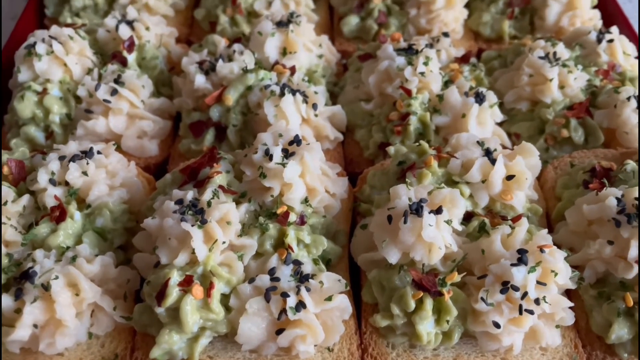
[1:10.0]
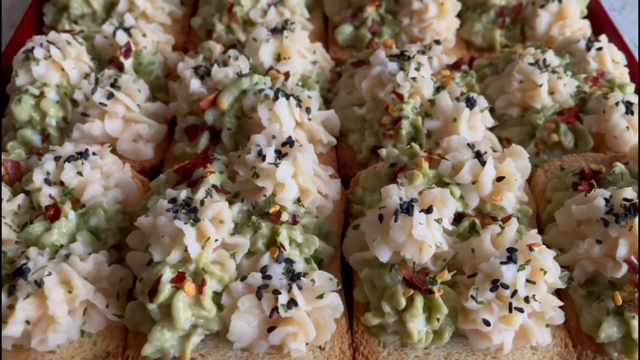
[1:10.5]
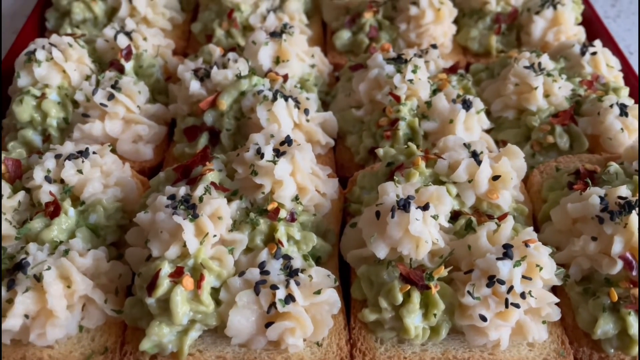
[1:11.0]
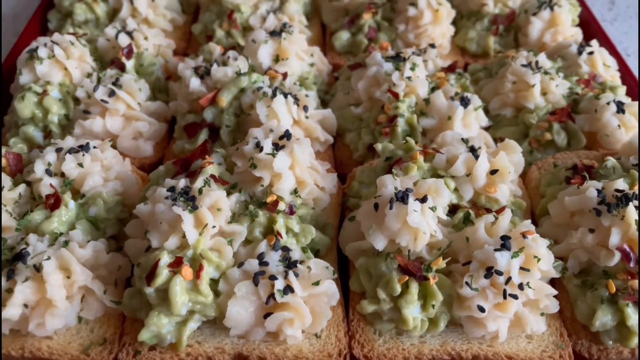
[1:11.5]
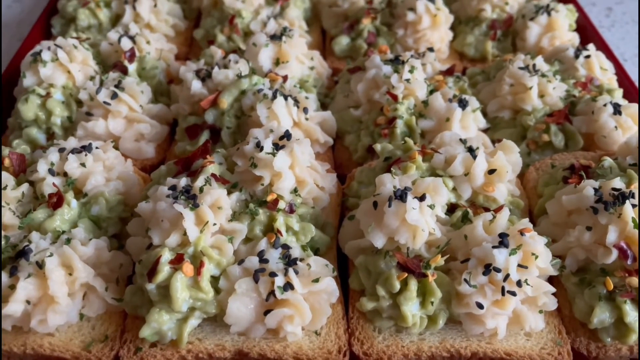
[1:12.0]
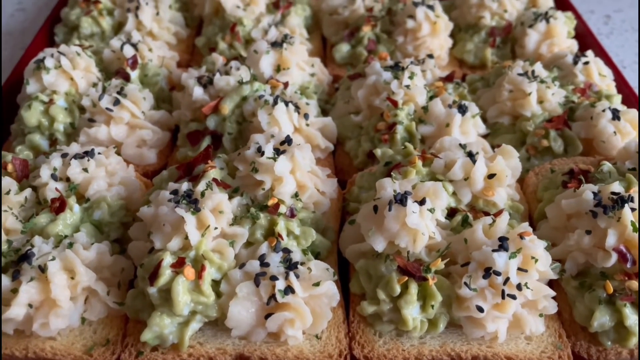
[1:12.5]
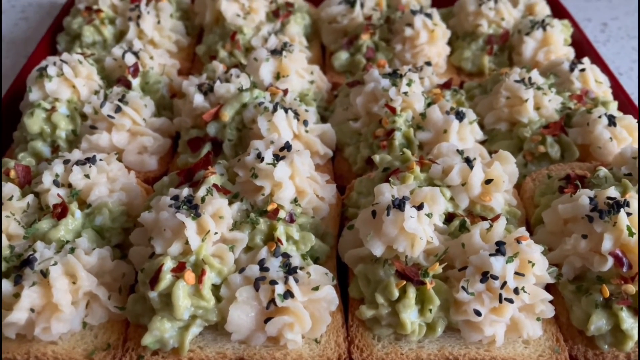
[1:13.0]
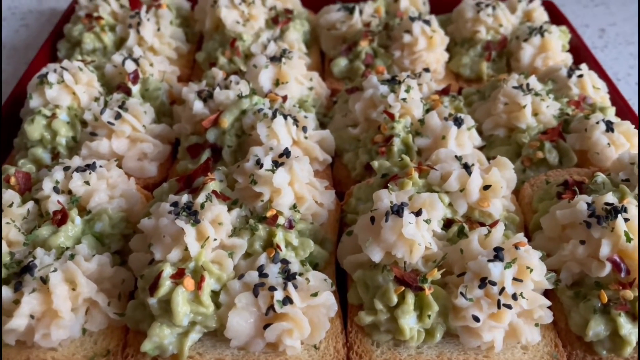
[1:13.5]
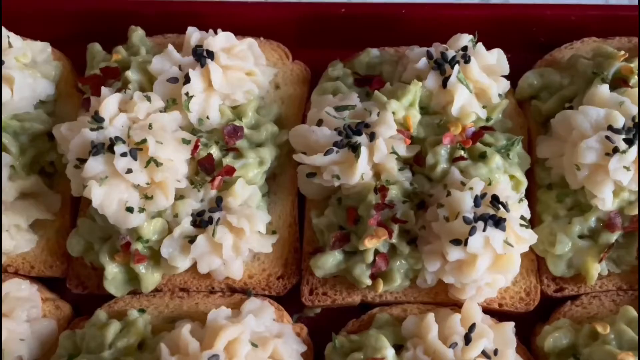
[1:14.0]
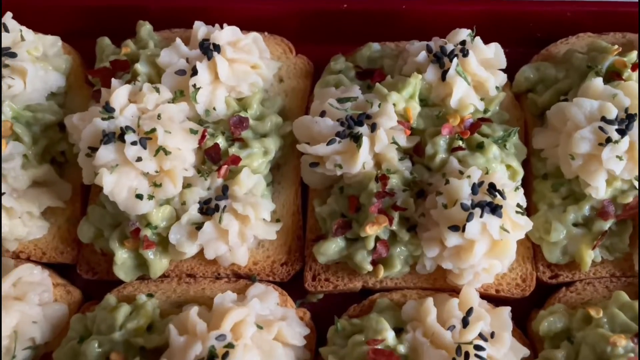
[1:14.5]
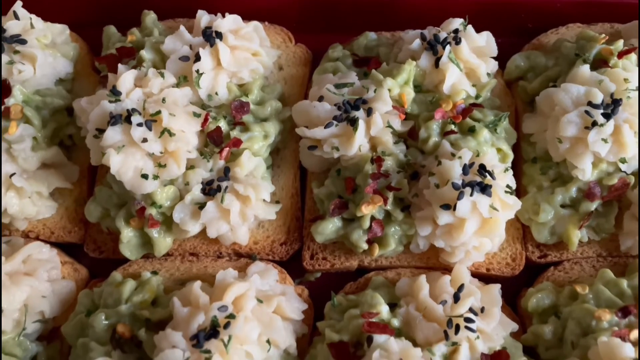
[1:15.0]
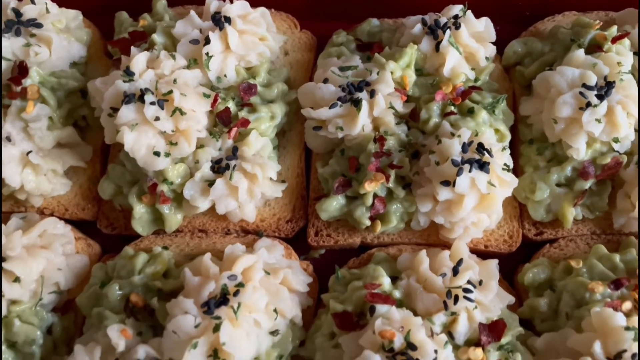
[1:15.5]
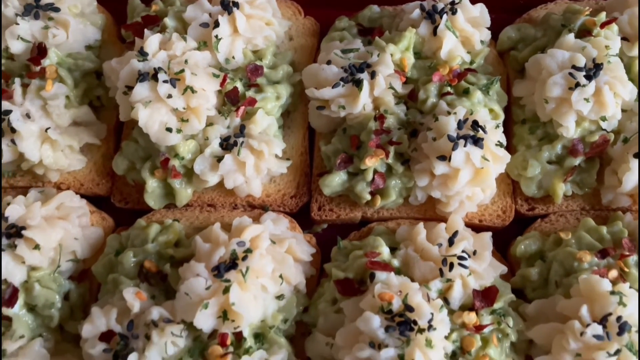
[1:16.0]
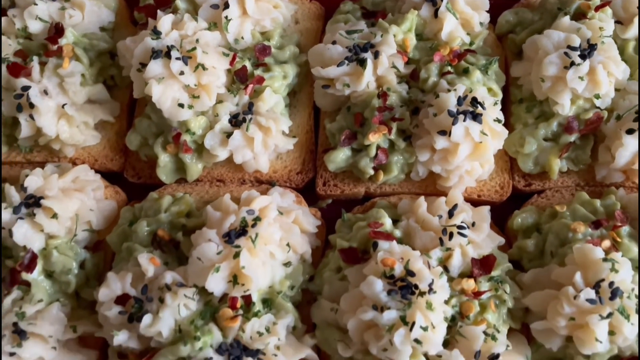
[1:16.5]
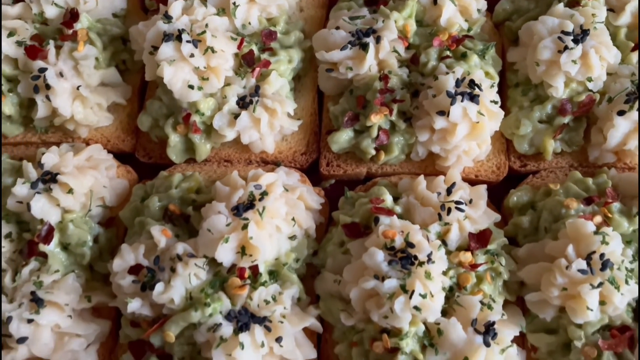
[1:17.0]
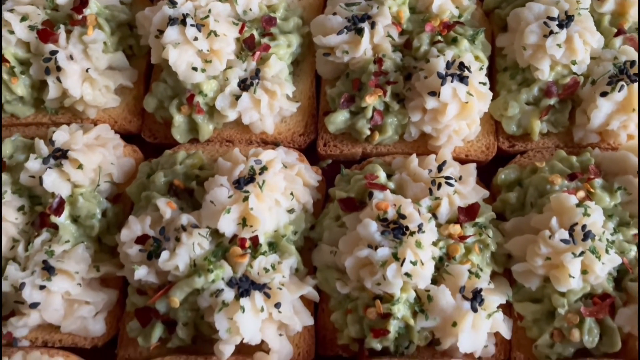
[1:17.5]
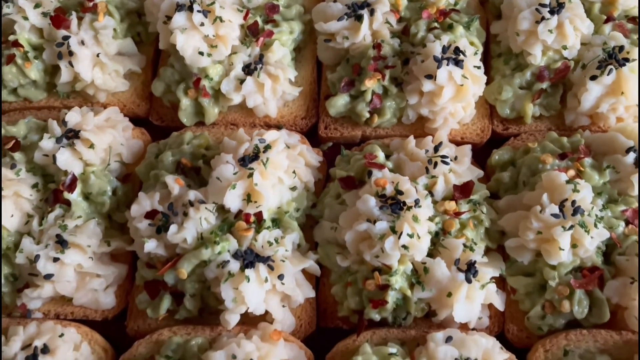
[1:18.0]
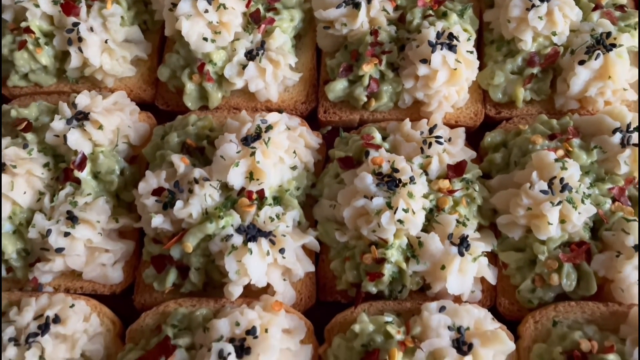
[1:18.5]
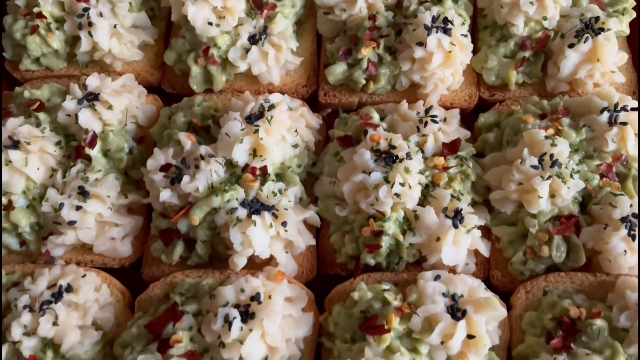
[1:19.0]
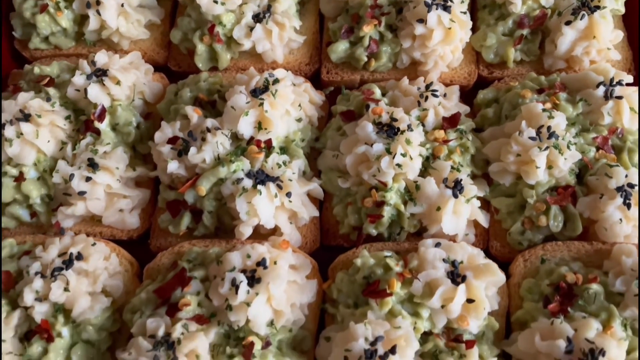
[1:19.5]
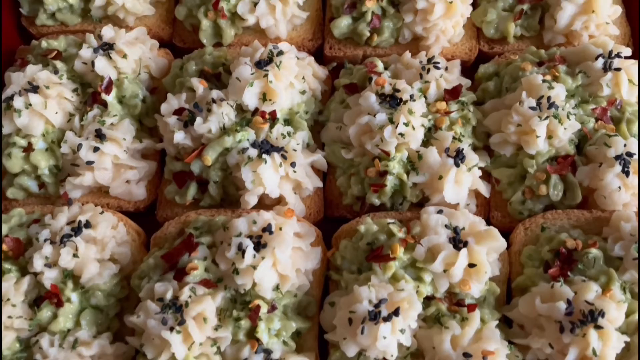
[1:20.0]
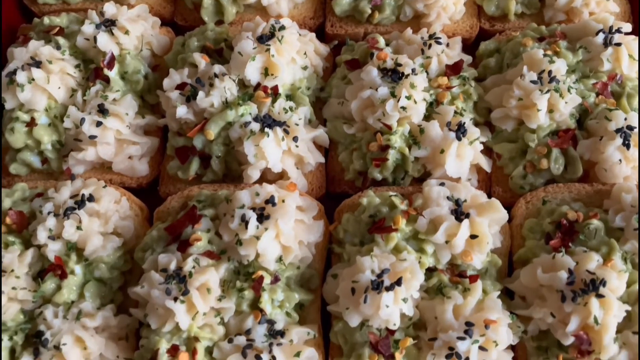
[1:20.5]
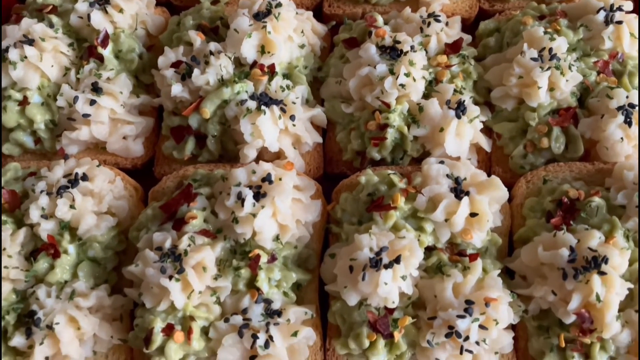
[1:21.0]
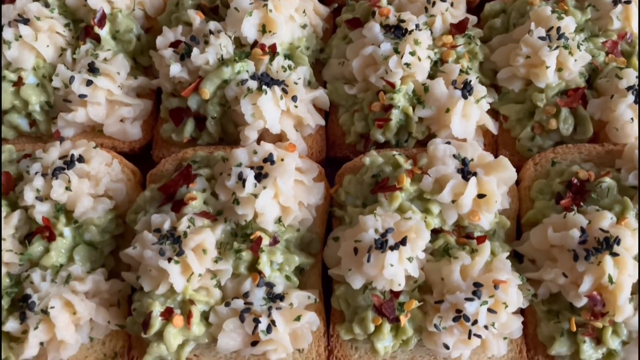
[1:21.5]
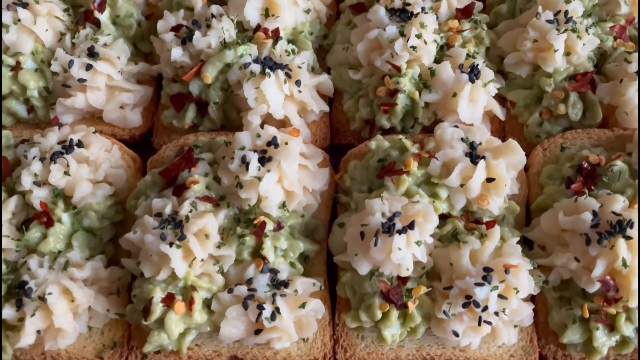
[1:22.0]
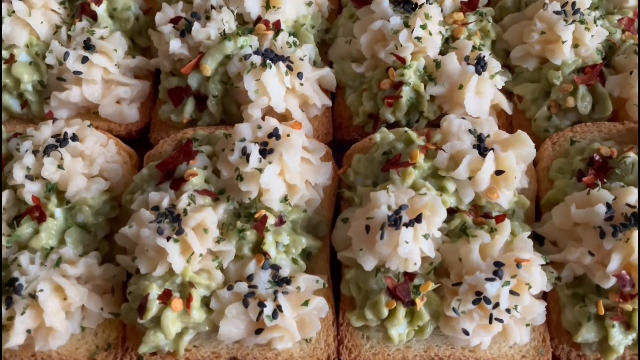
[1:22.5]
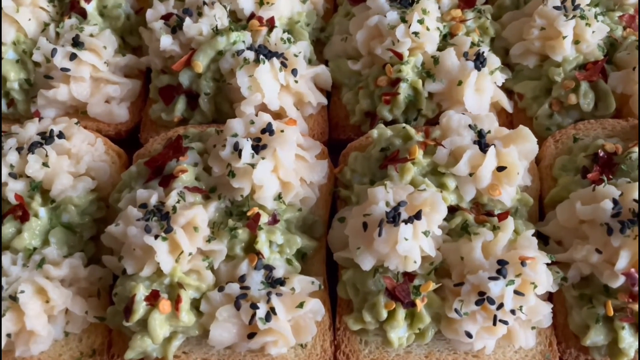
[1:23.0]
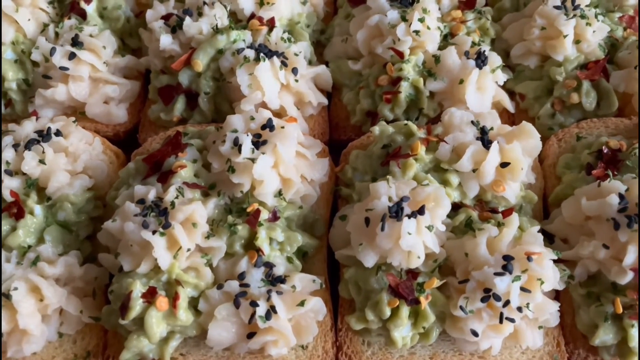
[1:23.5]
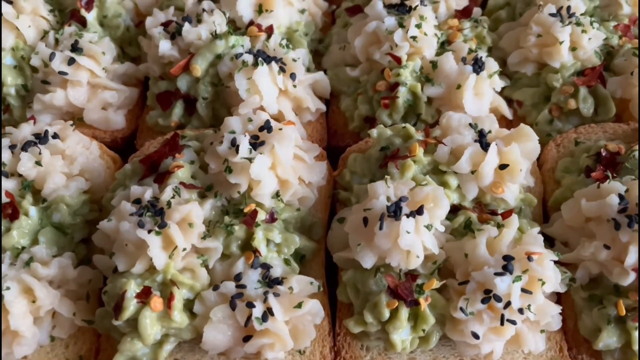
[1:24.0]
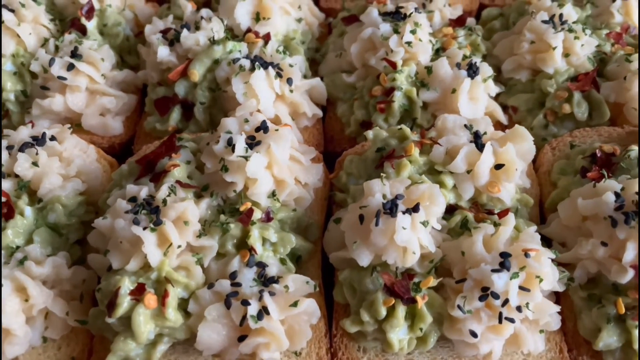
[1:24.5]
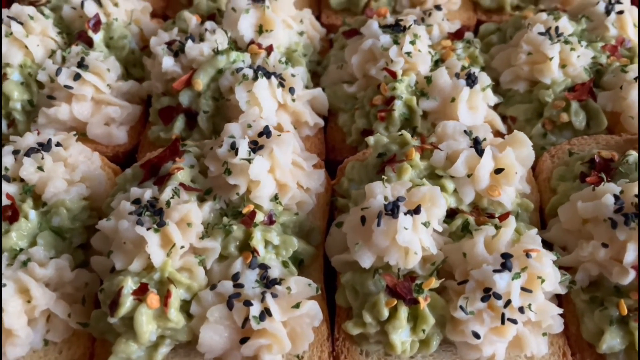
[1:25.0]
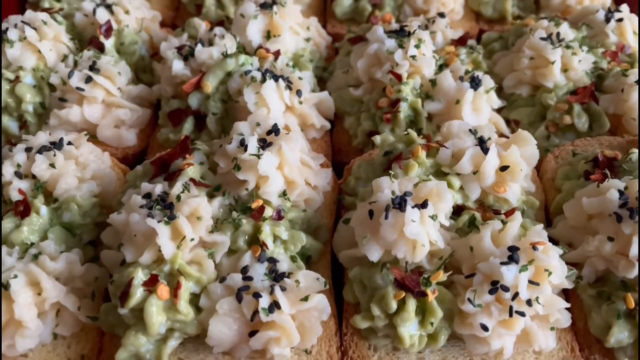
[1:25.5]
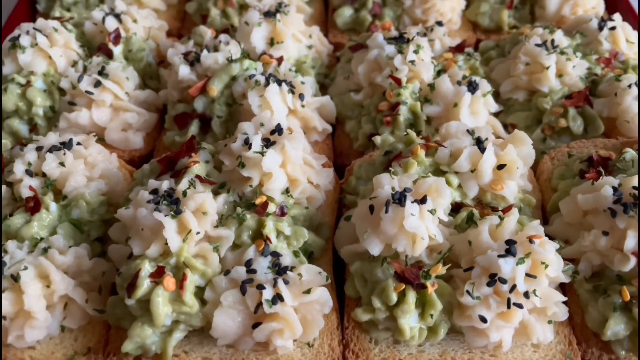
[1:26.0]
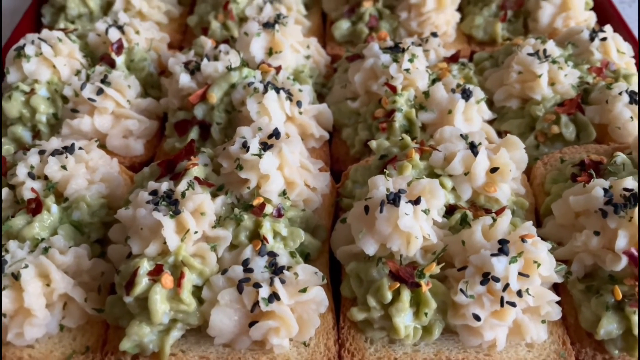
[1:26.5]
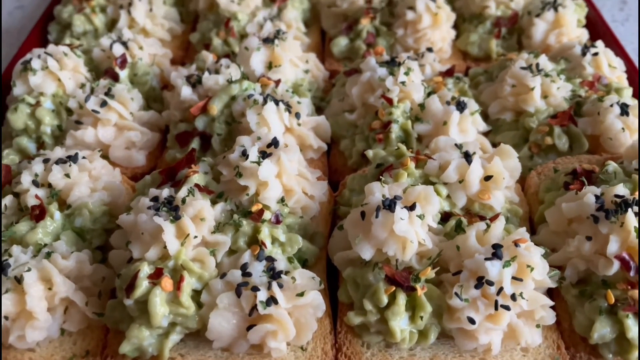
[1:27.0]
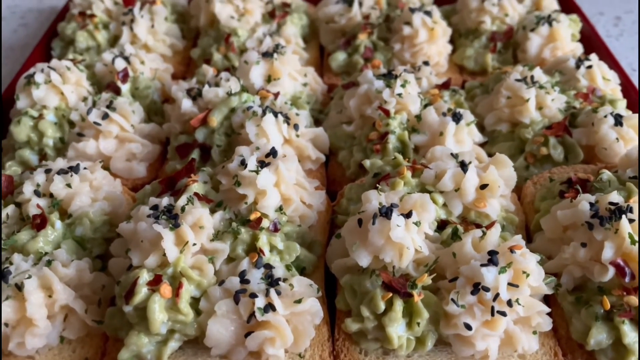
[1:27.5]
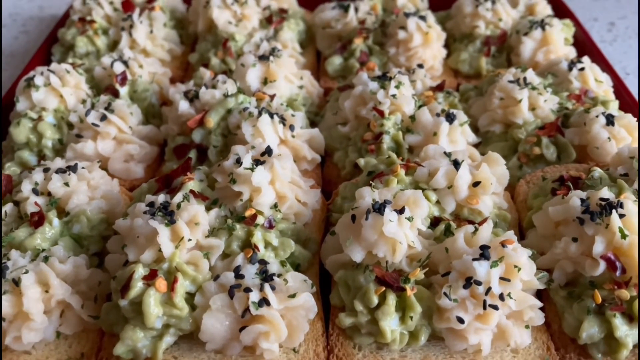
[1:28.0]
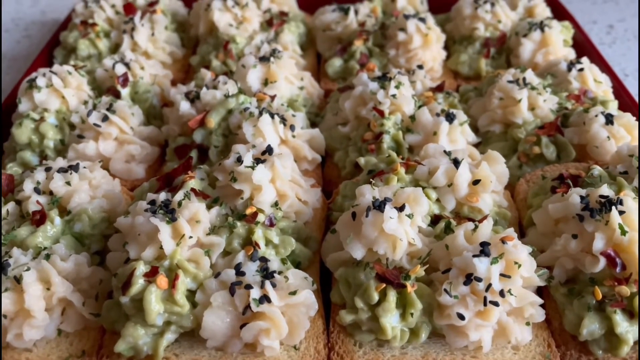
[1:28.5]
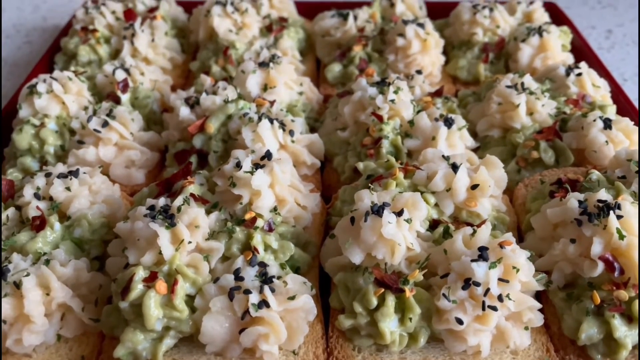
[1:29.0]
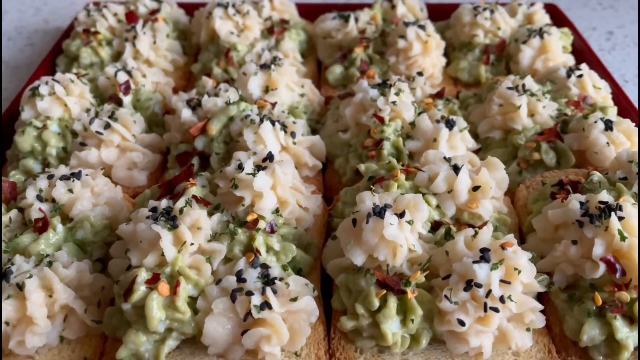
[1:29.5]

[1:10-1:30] A close-up shows the 12 pieces of bread covered in the egg-ocado mixture and the potato mixture and sprinkled with black and red peppers, arranged neatly in three horizontal rows and four vertical columns in a red tray that sits on a white table or countertop. The camera pans down and another angle of the bread on the tray is shown. The view switches to a close-up of the top row of bread, then pans down the center two columns, looking at each row, zooming out a little before zooming back in at the bottom row of four pieces. The camera pans down a little more to show all 12 pieces of bread on the red tray. Next comes an image of a single piece of bread.